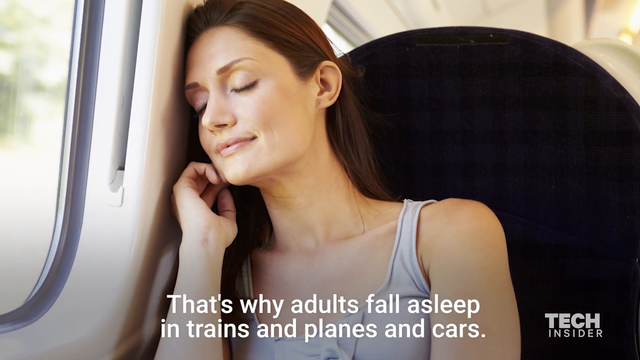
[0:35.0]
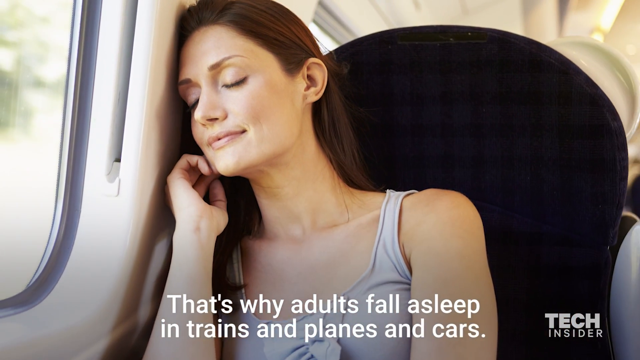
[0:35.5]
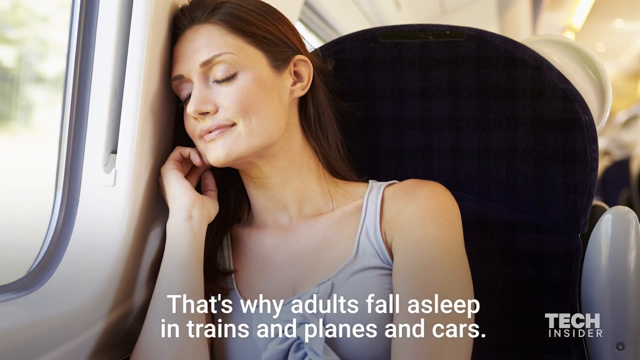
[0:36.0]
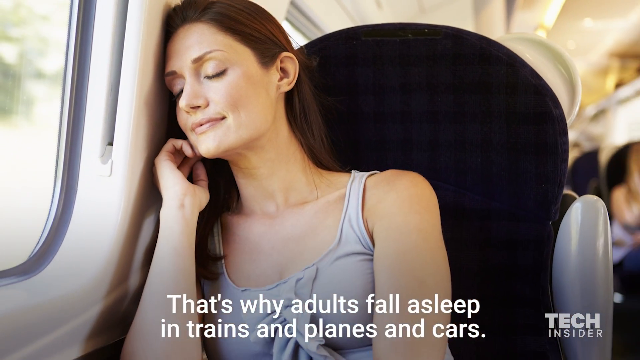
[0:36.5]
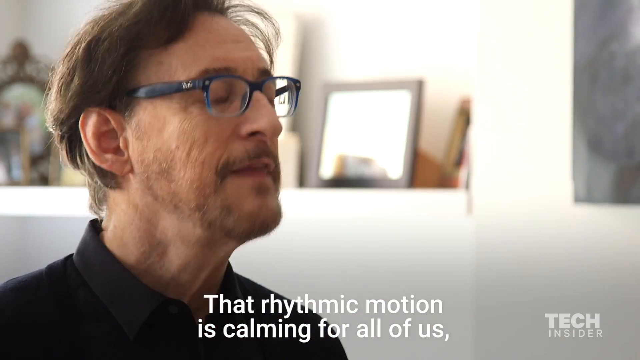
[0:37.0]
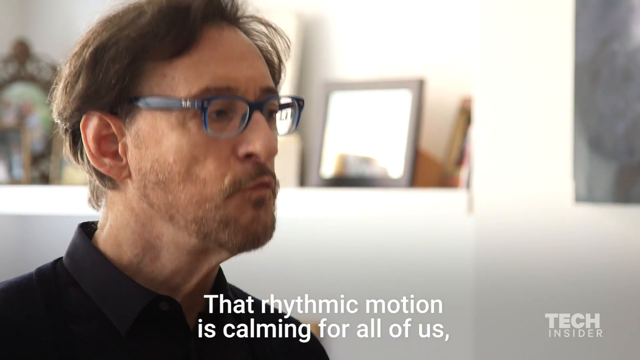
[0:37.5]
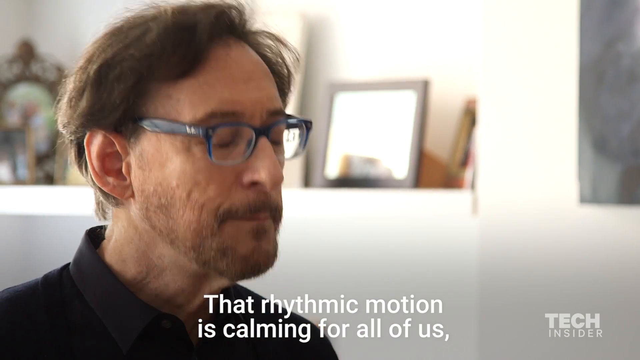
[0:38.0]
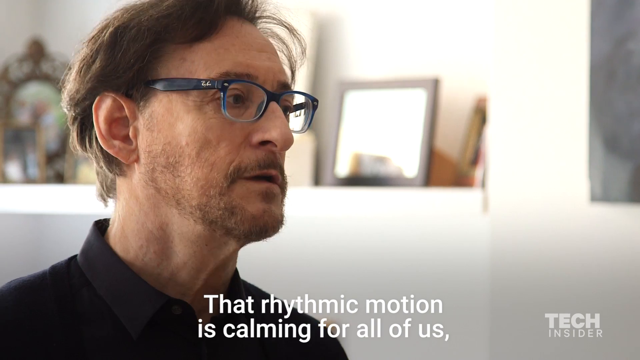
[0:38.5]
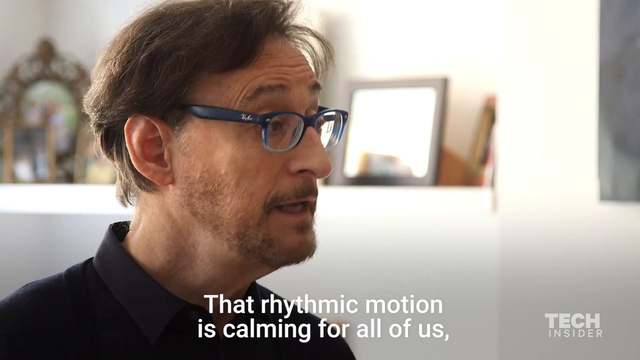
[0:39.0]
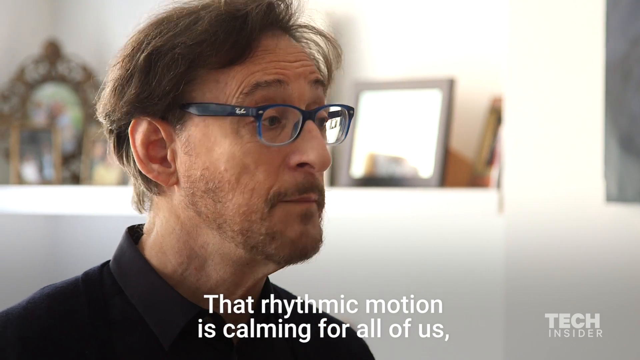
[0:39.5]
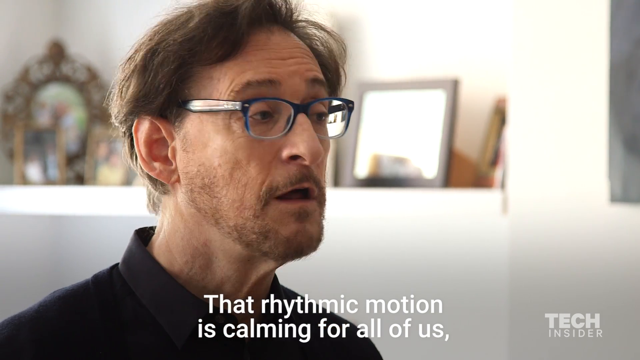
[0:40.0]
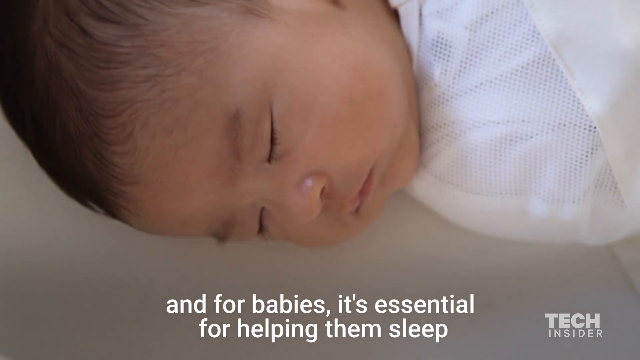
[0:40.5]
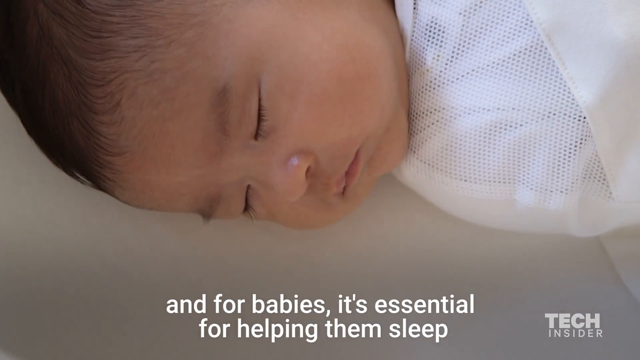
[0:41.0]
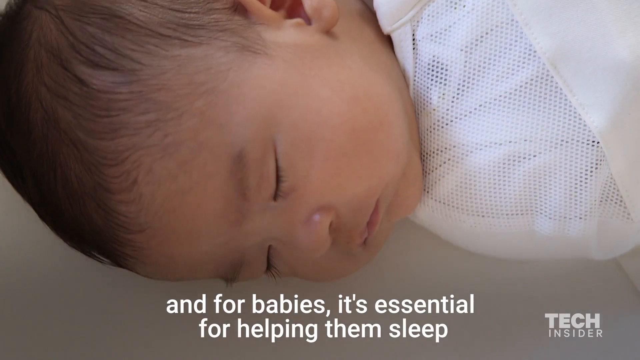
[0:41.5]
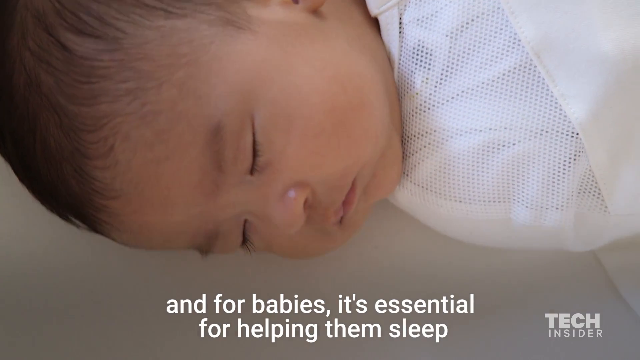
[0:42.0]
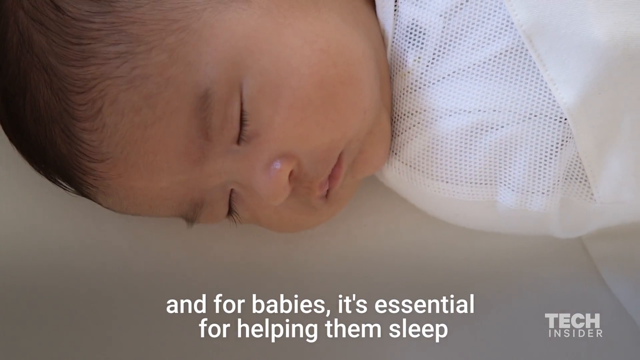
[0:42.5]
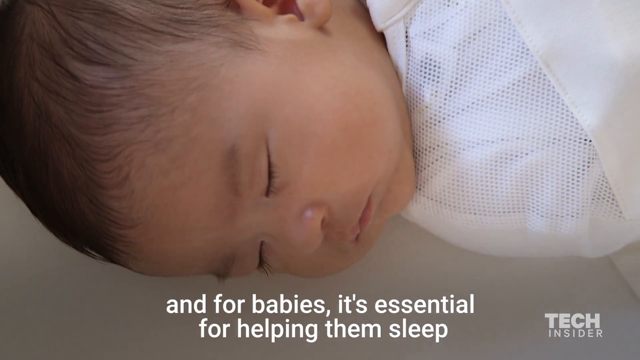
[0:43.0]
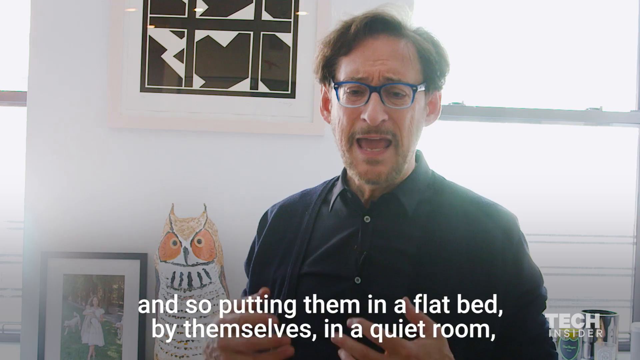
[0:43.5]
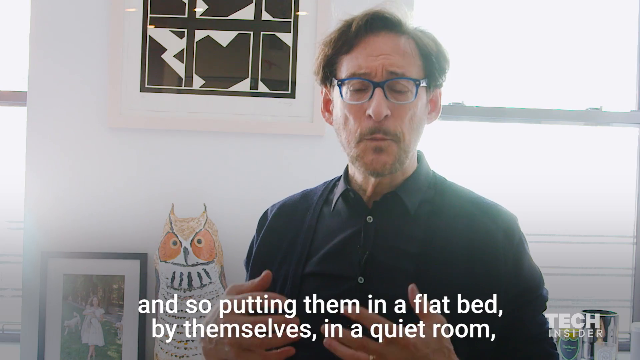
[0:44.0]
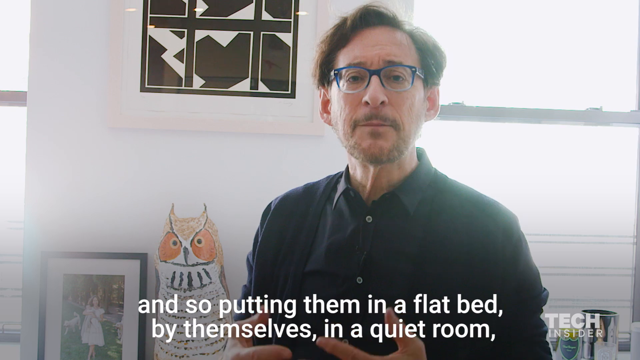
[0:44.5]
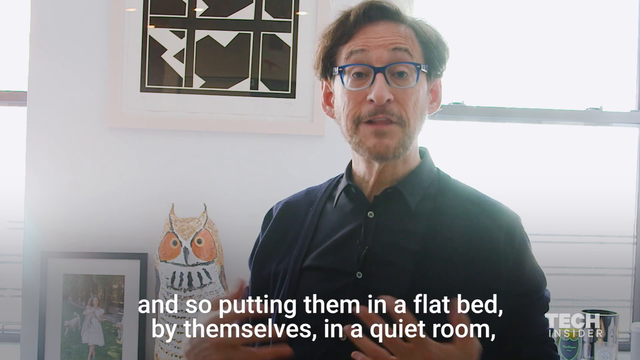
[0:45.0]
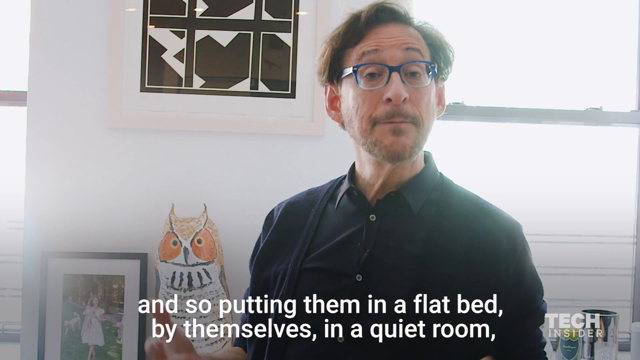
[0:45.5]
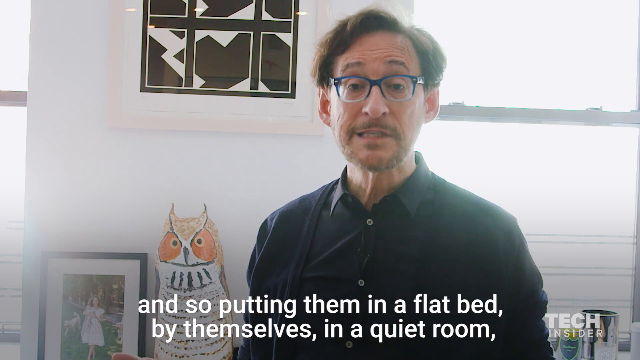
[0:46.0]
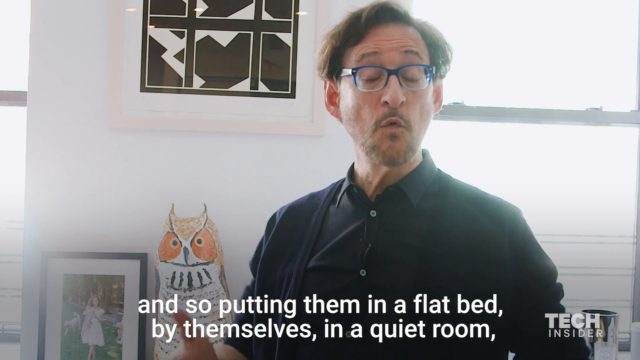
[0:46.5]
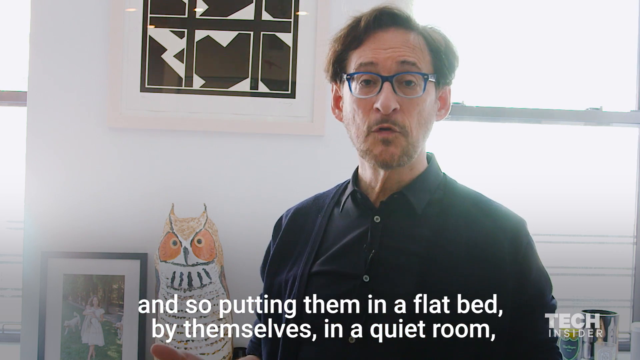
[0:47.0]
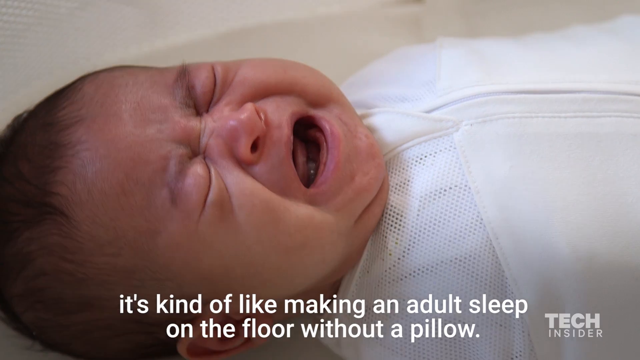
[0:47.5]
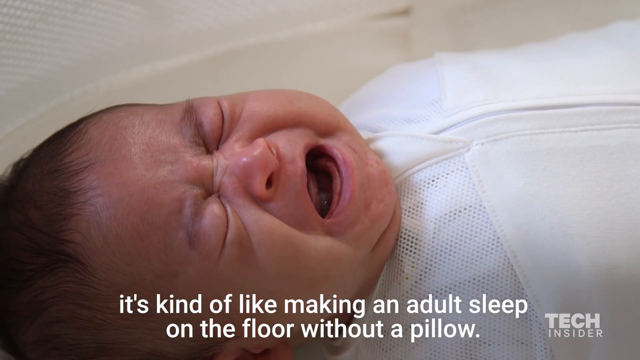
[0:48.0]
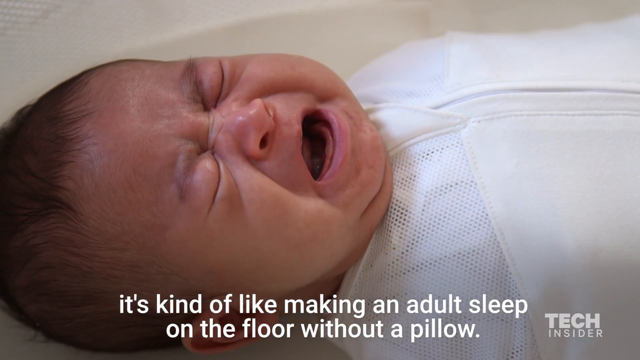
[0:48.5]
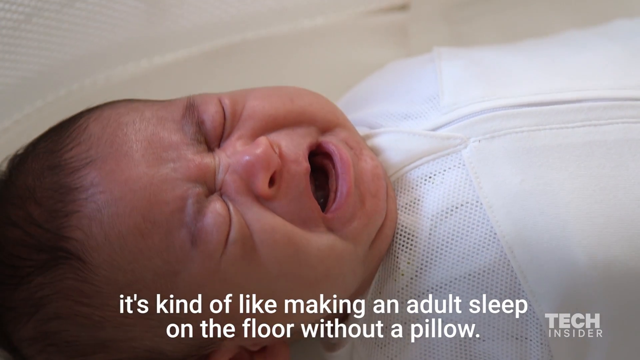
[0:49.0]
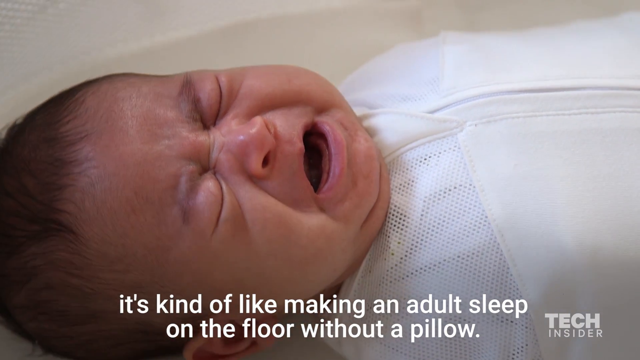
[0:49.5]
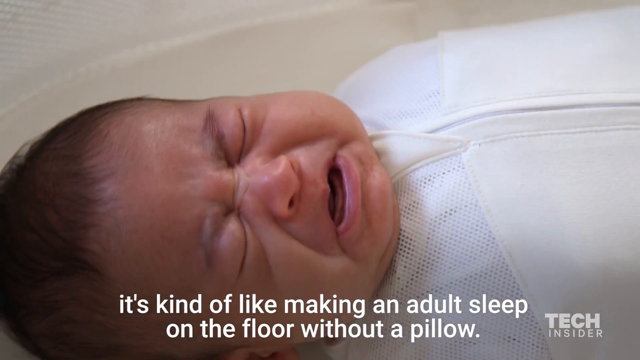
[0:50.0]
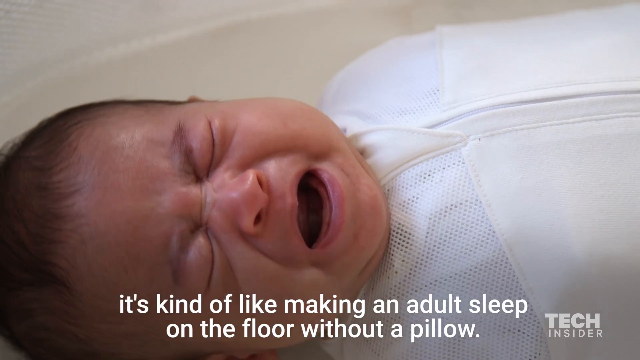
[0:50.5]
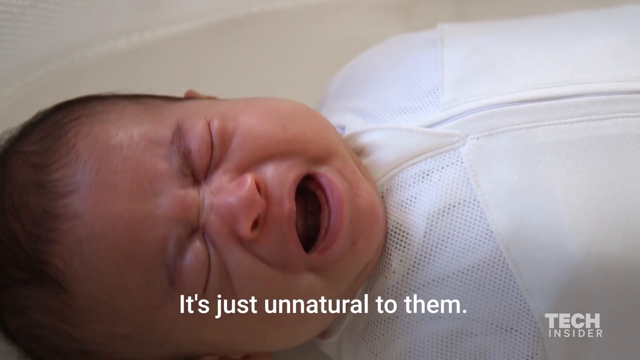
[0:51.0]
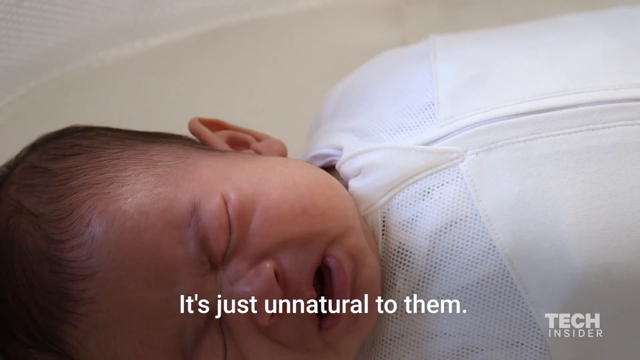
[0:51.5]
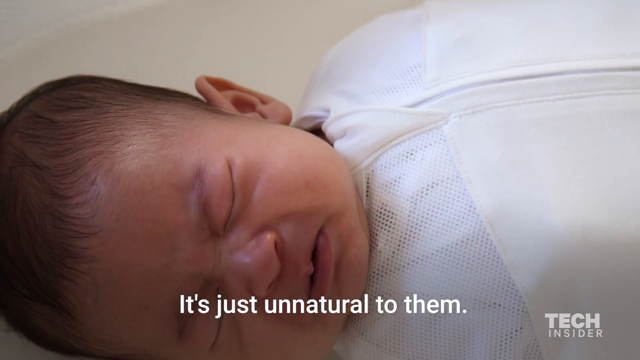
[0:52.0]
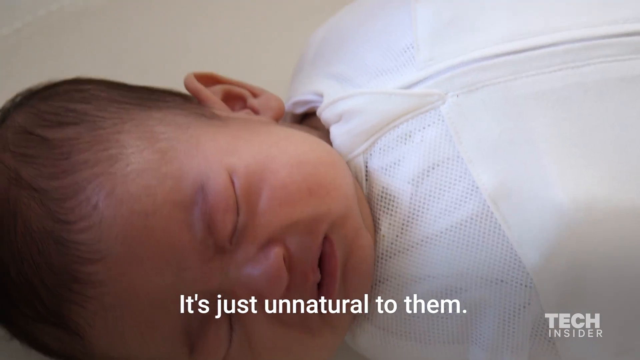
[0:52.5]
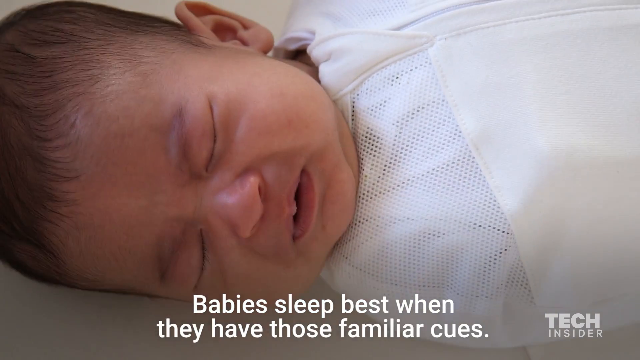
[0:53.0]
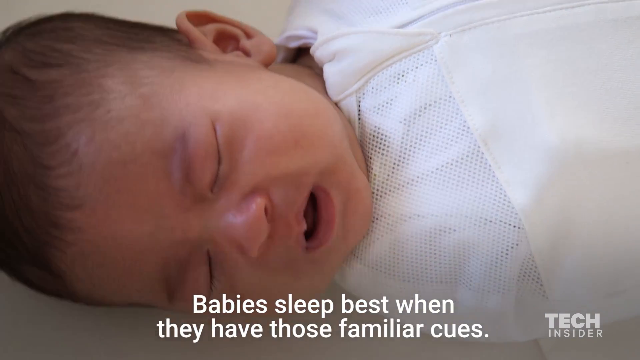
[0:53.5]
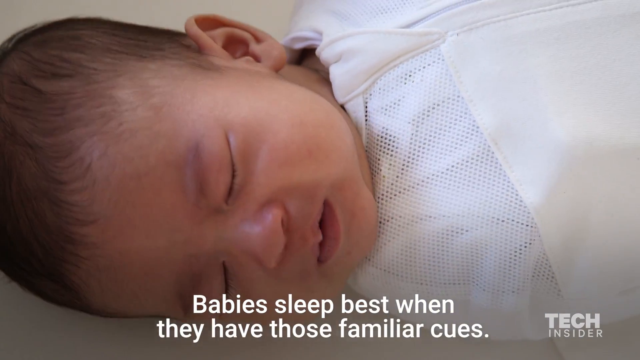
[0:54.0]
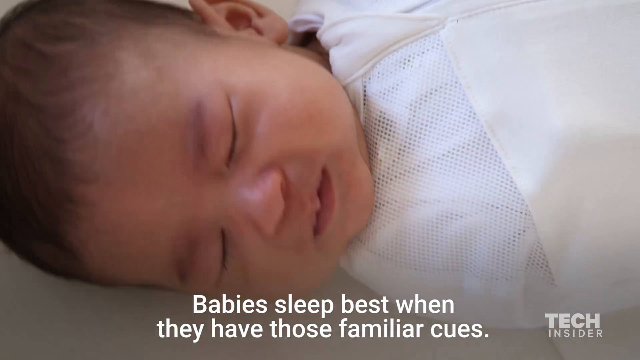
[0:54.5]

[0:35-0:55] The camera views the man from the side and then transitions to the front of him. A section of the screen shows a baby crying and appearing to be in distress; the baby rocks back and forth with its eyes closed. White text at the bottom of the screen narrates what is happening, and the Insider Tech logo is in the bottom right portion of the screen. A plastic owl is in the background, and the man appears to be conducting the interview from what appears to be his house.